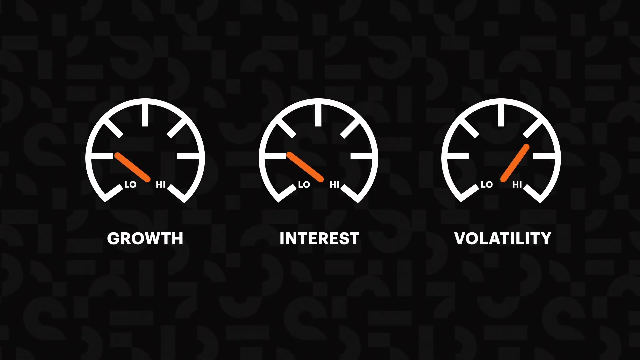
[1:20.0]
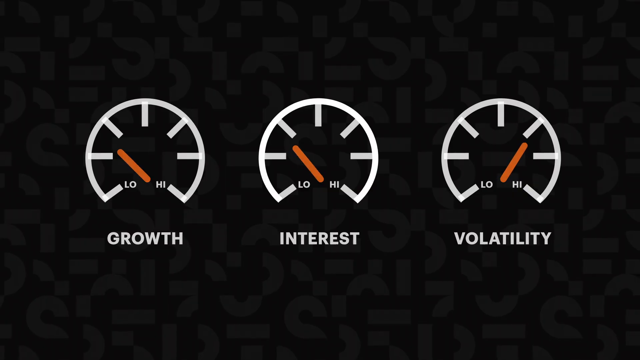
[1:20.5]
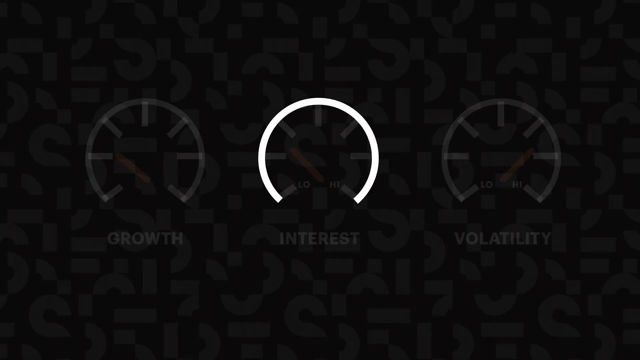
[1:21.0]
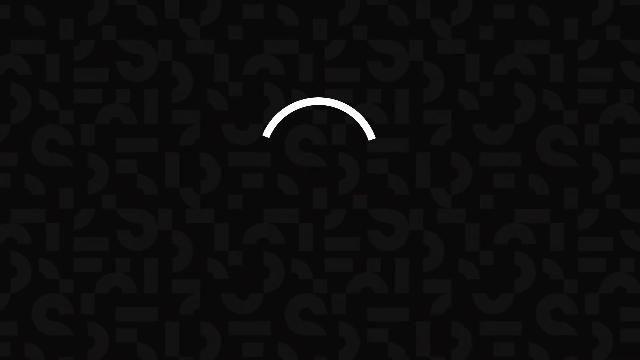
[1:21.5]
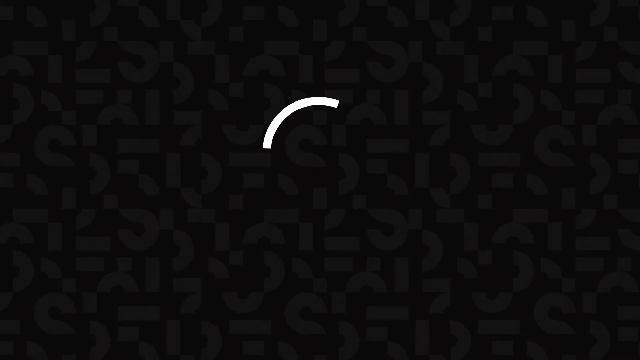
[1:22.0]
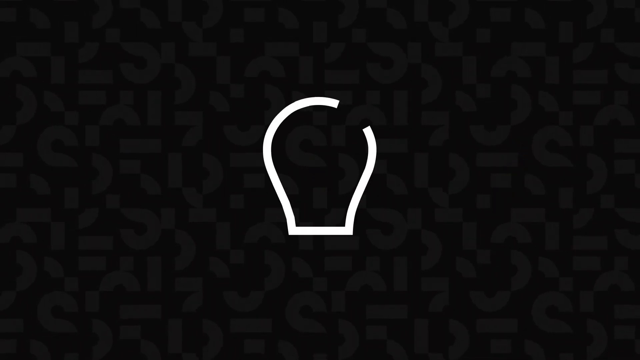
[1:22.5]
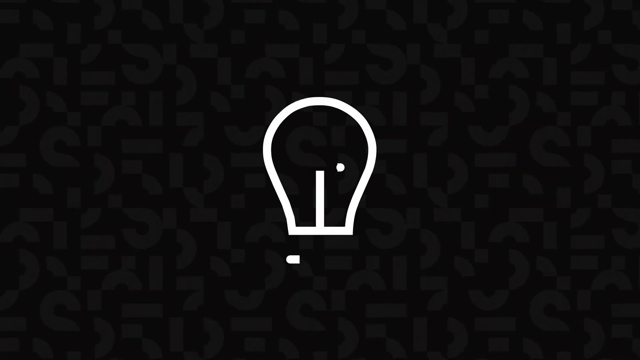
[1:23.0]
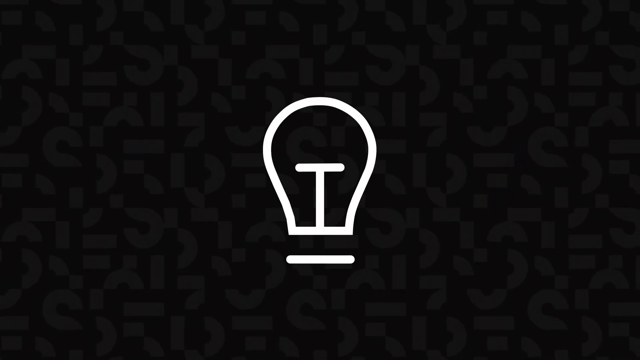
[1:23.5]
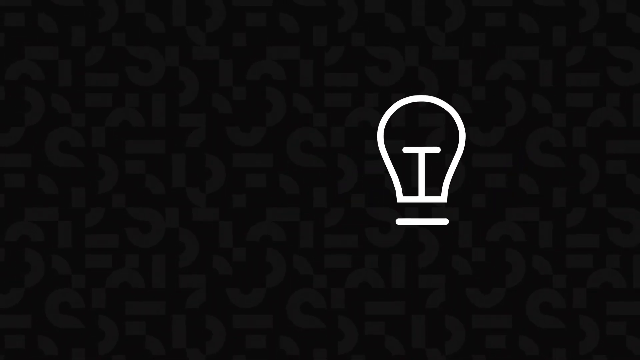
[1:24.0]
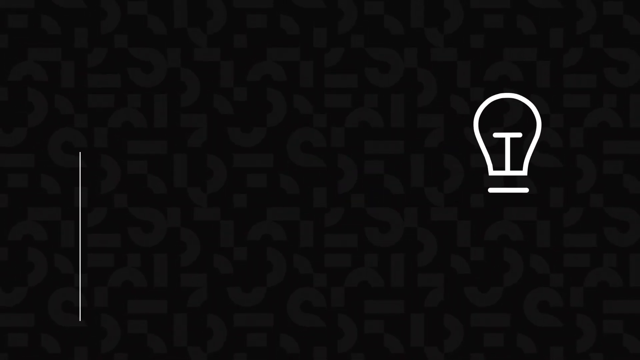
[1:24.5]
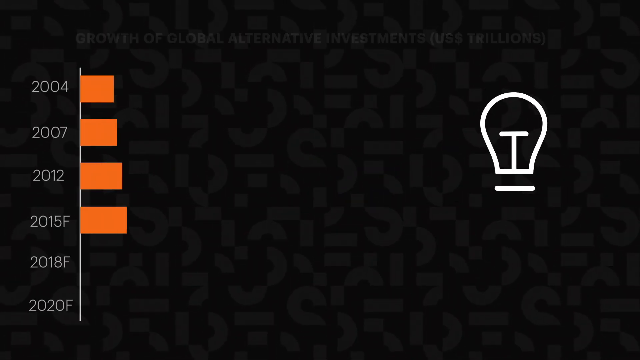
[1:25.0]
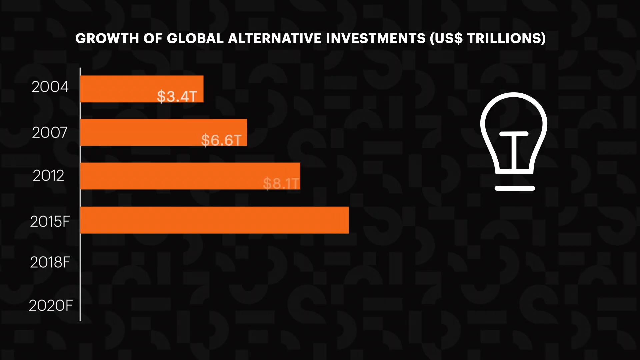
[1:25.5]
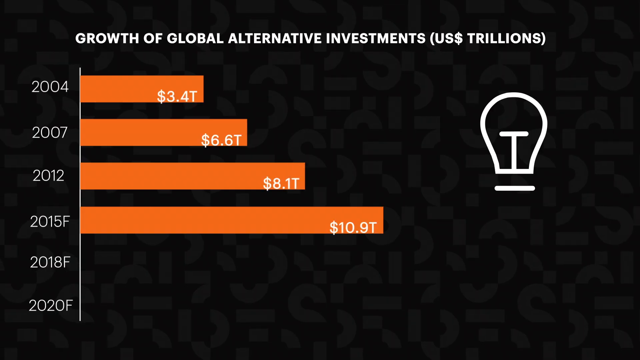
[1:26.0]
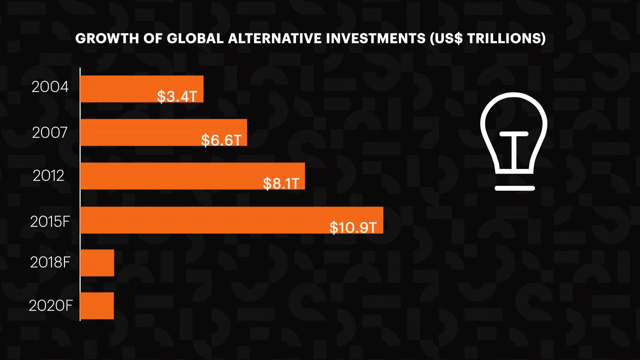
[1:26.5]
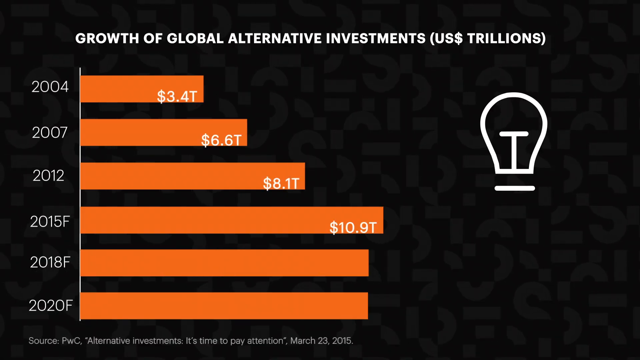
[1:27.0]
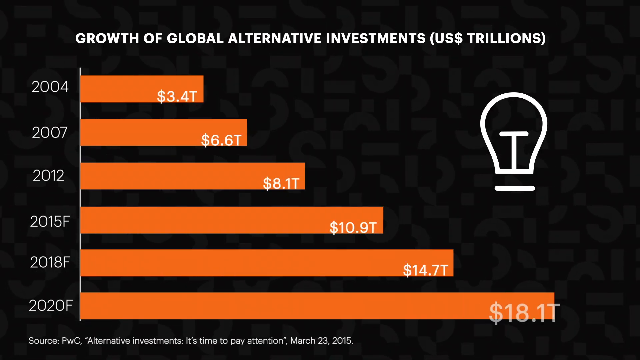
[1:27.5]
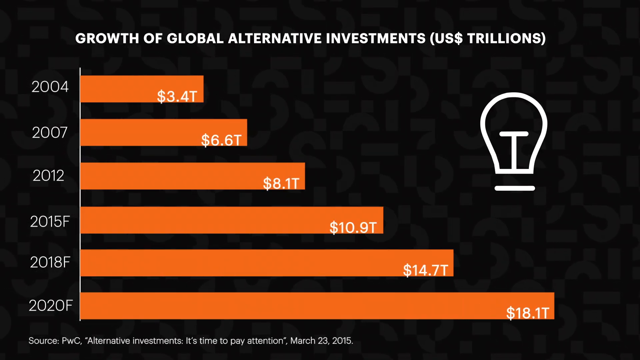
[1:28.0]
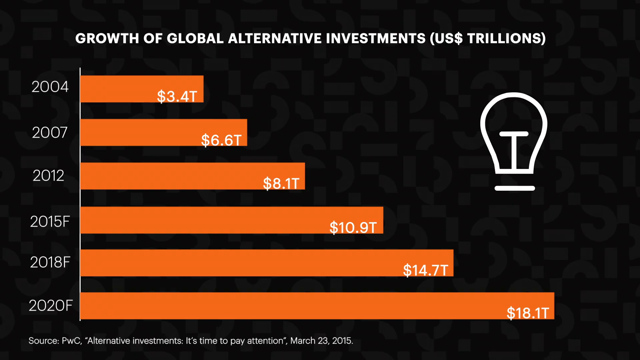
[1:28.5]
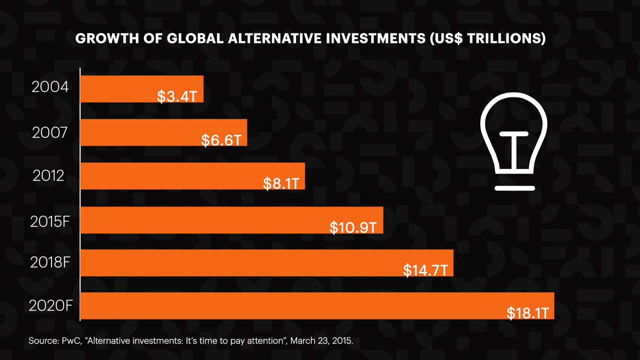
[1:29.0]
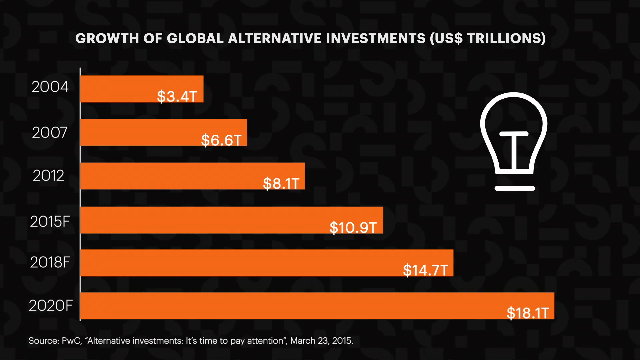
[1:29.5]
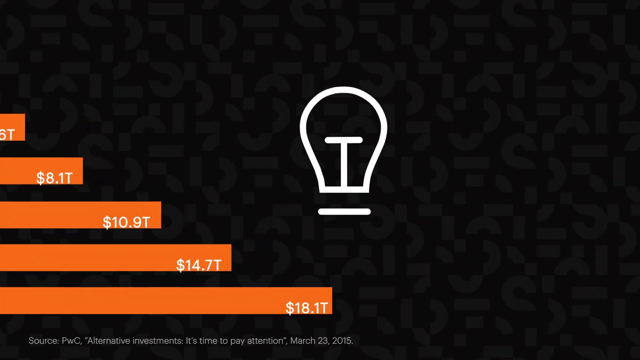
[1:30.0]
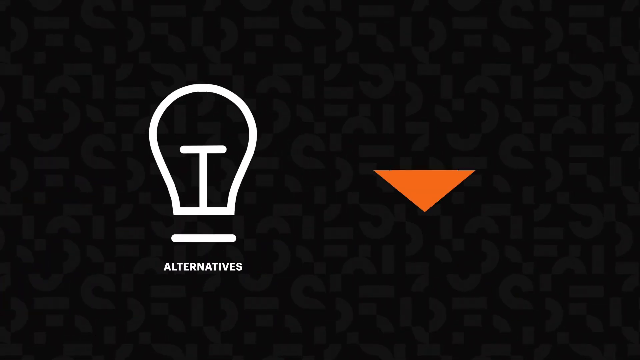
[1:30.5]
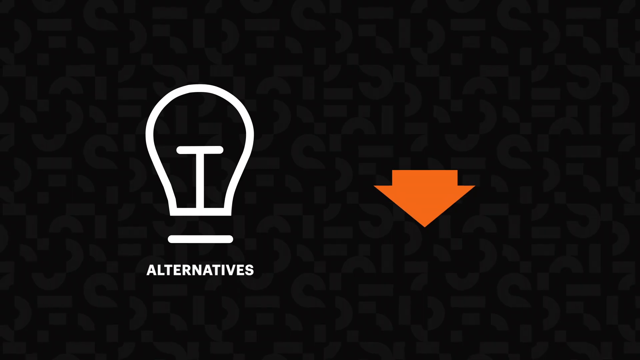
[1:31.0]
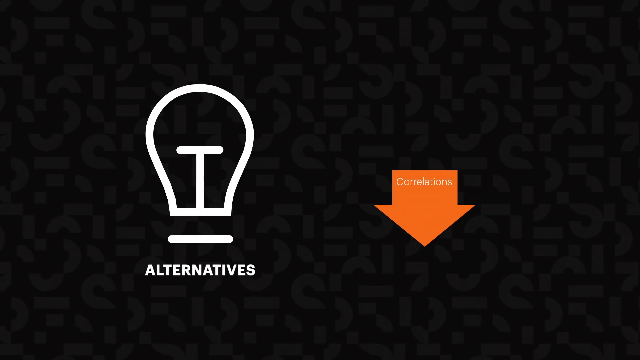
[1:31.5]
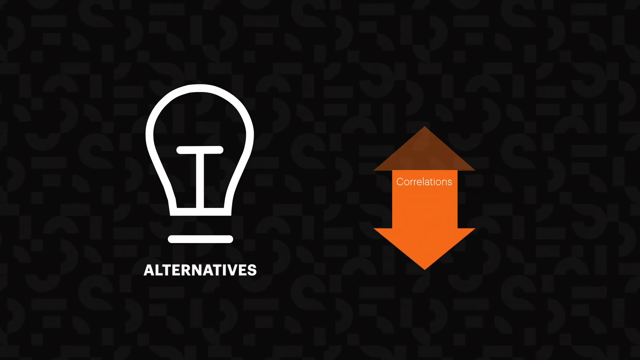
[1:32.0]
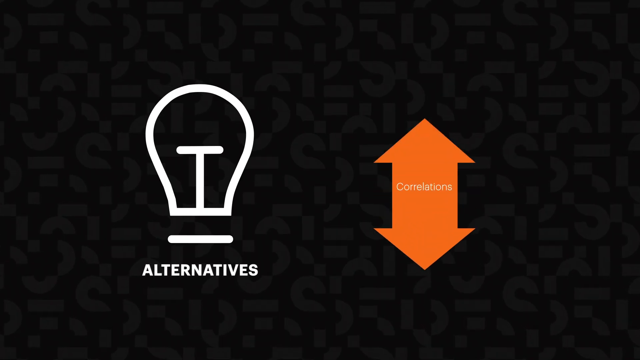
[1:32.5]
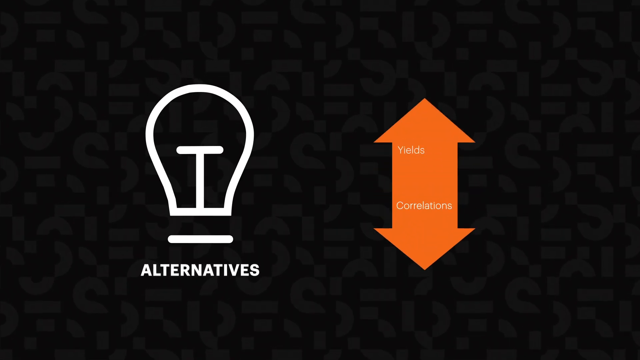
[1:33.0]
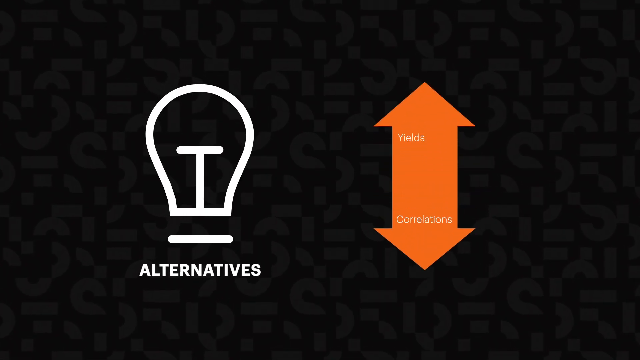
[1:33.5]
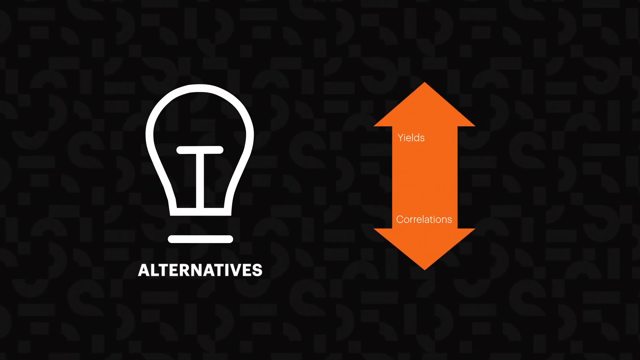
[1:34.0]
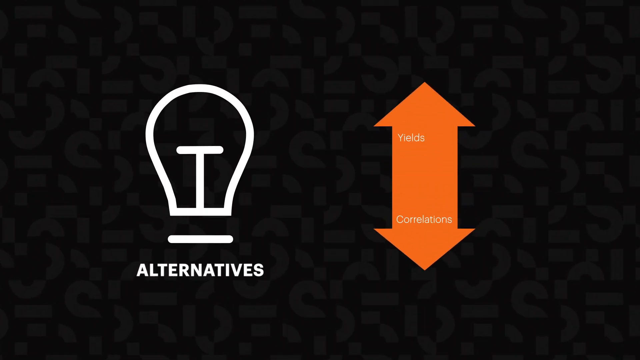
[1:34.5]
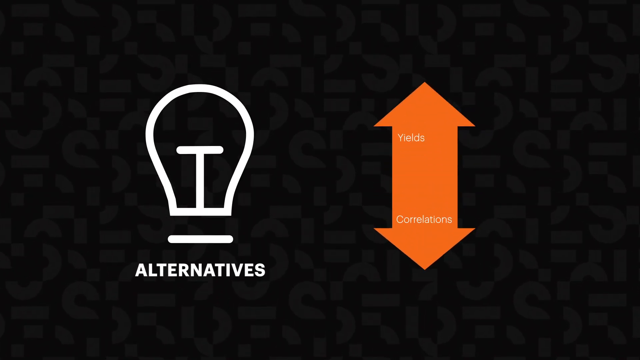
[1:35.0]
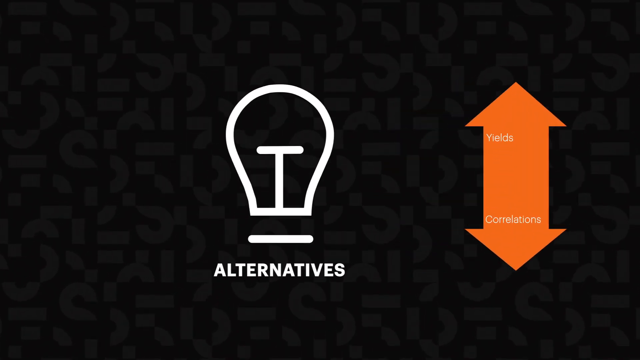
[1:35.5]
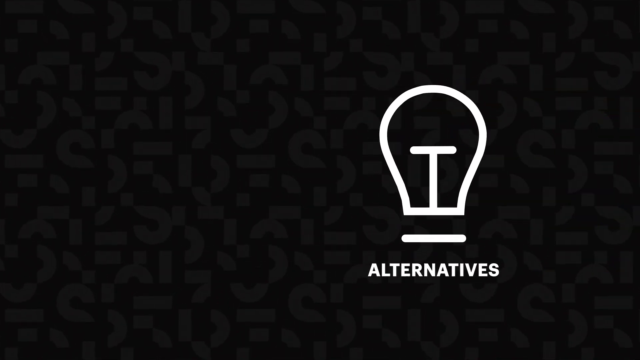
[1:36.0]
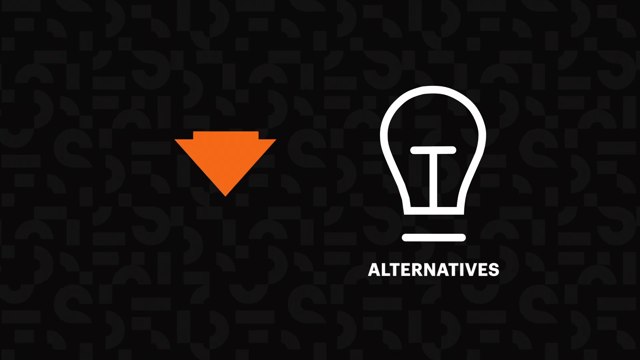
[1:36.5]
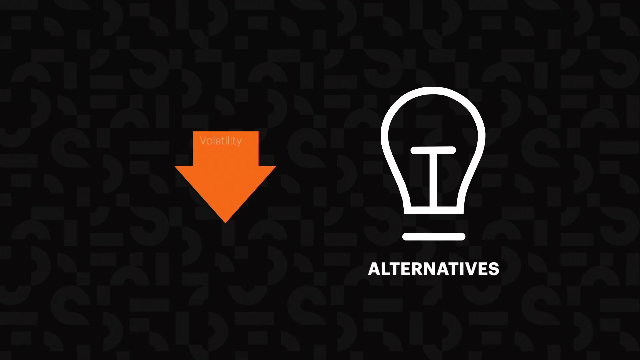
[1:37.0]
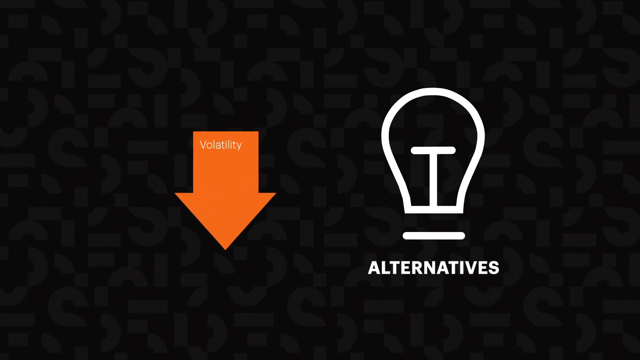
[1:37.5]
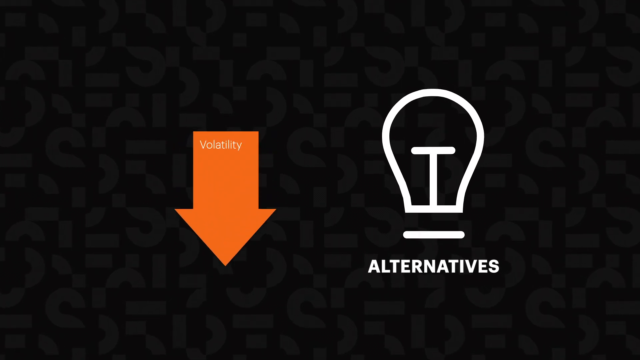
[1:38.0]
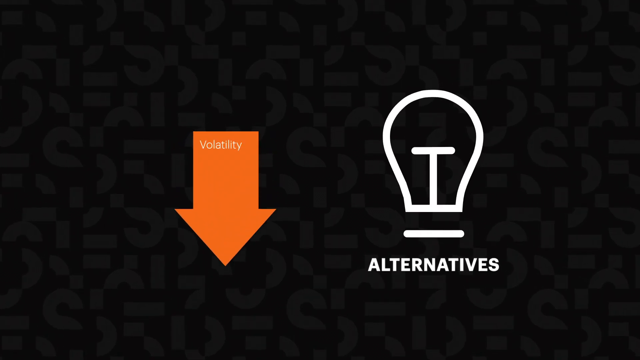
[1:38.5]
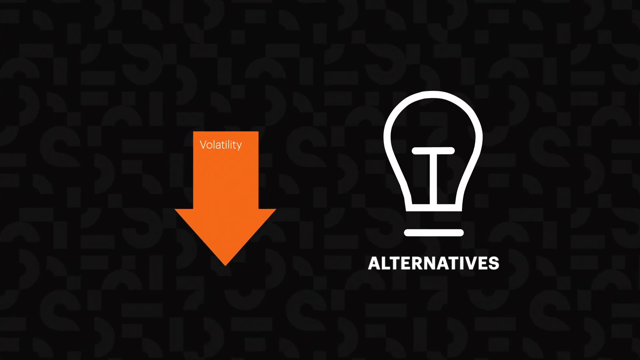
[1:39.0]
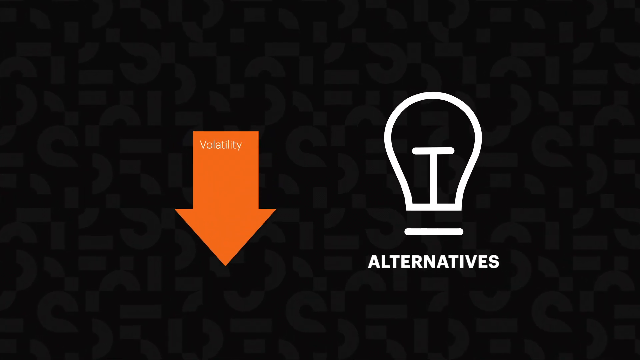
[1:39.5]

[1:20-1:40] Three digital odometers are on the screen with "growth," "interest" and "volatility" underneath them, and then they all disappear. The third one becomes an illustration of a light bulb, a simple white outline, which kind of shrinks and moves over to the right side of the screen. Text at the top reads "growth of global alternative investments (U.S. trillions)," and a bar graph underneath has six orange bars that appear one by one in an animation. The left side shows the years, ranging from 2004 to "2020 F," and the amounts in the bars range from 3.4 trillion to 18.1 trillion. A light bulb then appears again with "alternatives" underneath in white capital letters, and two orange arrows on its right read "yields" and "correlations" in white text inside them. The arrows move to the right, and another orange arrow pointing downward appears with "volatility" in white text on top. The background shows the same pattern of S shapes on dark gray.